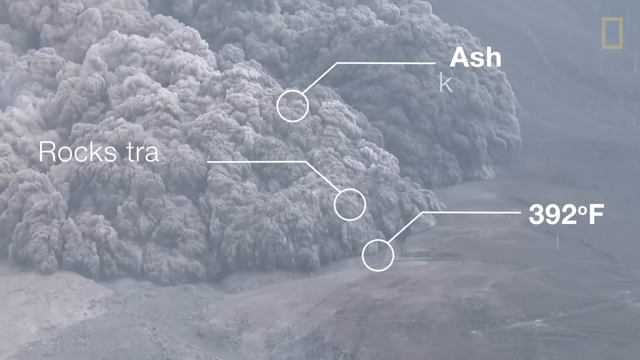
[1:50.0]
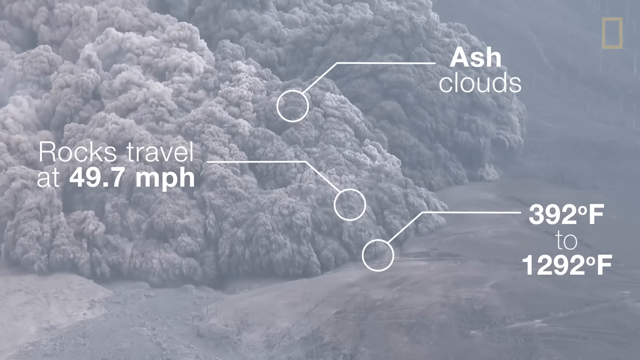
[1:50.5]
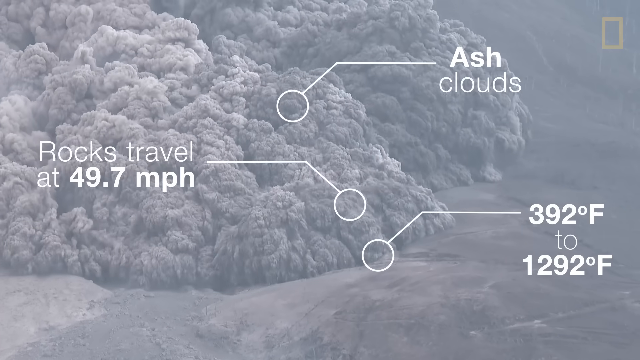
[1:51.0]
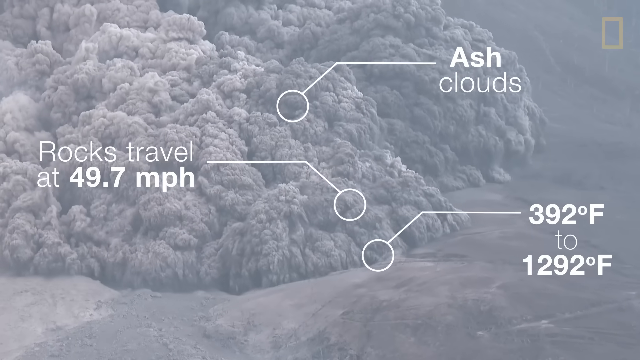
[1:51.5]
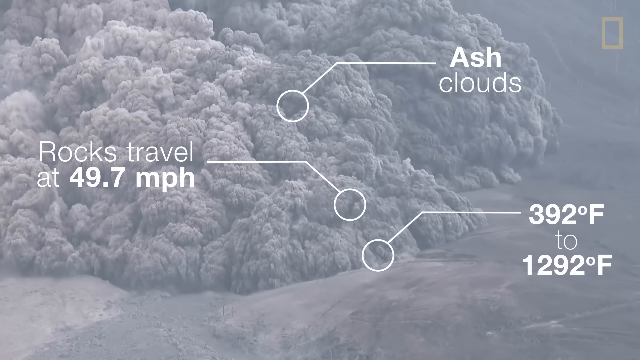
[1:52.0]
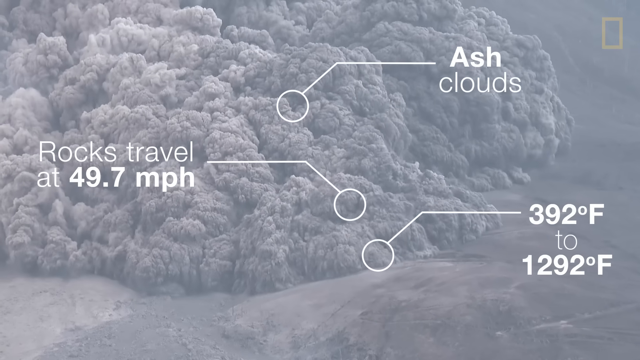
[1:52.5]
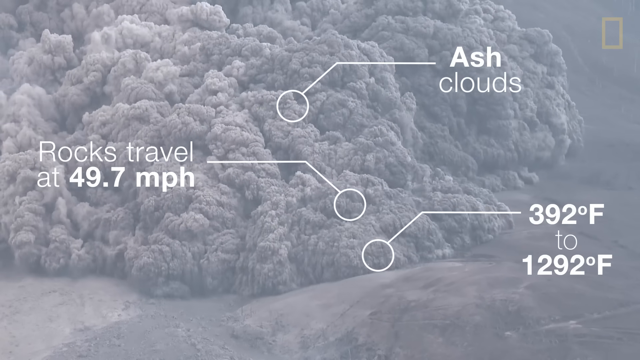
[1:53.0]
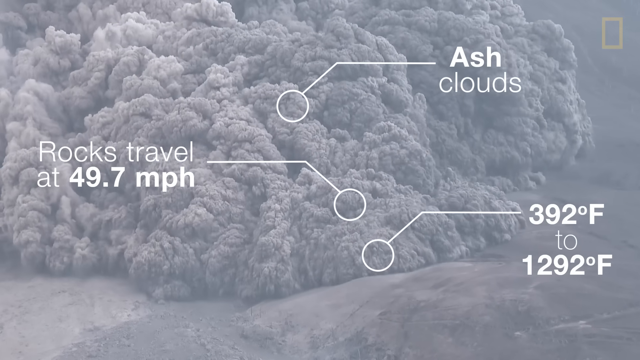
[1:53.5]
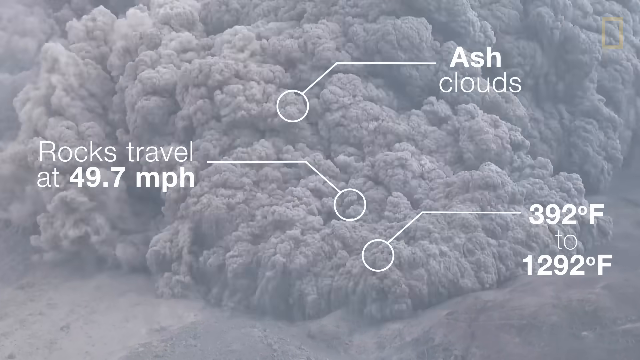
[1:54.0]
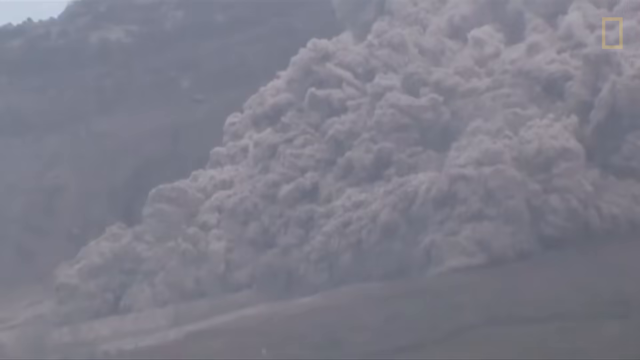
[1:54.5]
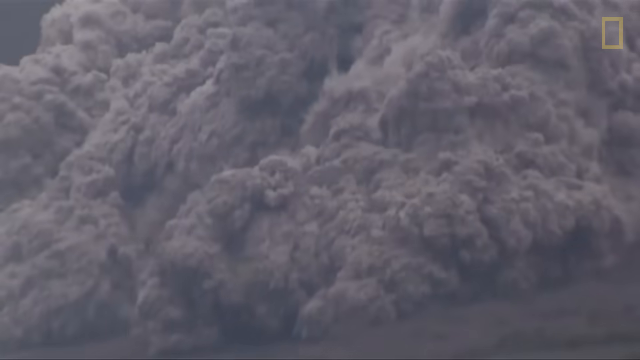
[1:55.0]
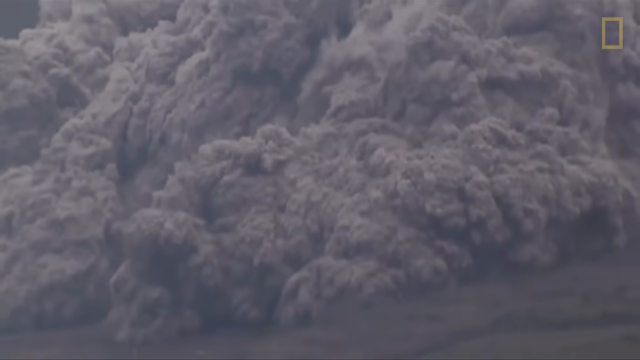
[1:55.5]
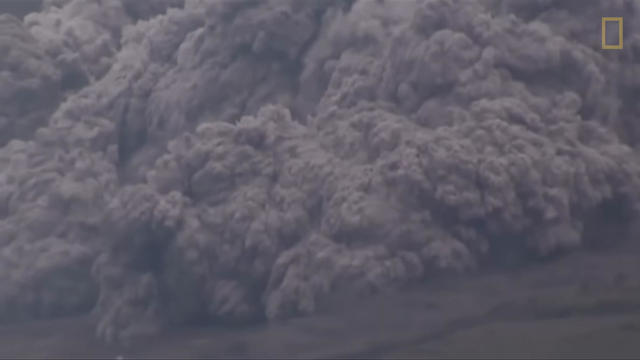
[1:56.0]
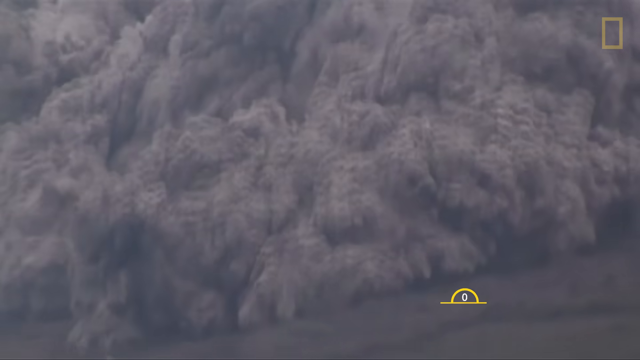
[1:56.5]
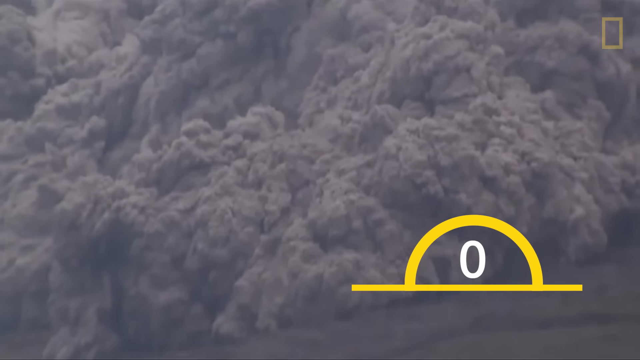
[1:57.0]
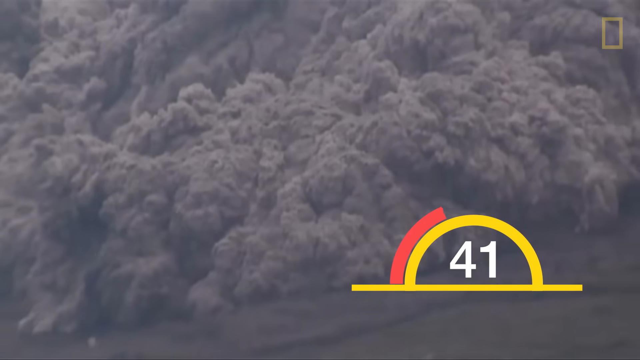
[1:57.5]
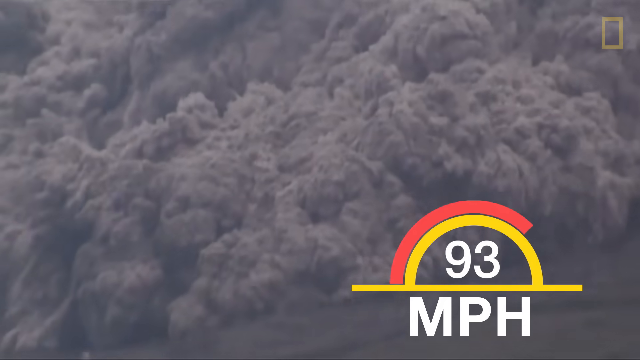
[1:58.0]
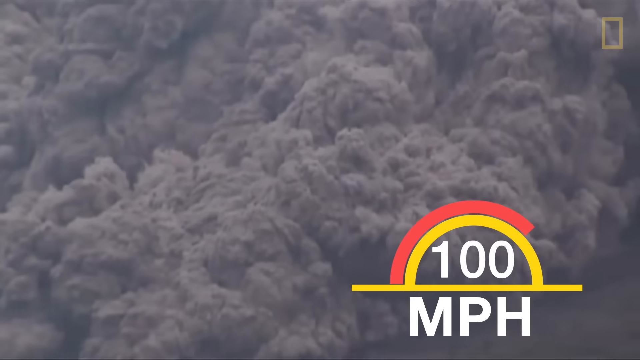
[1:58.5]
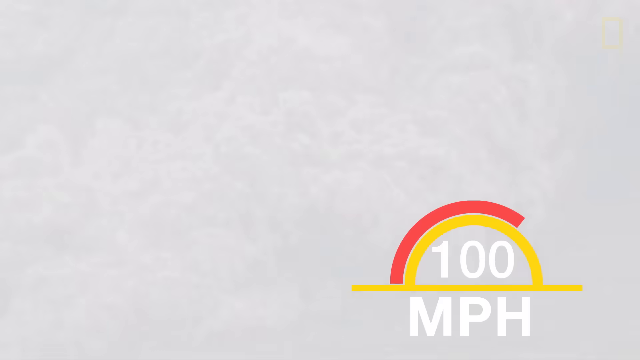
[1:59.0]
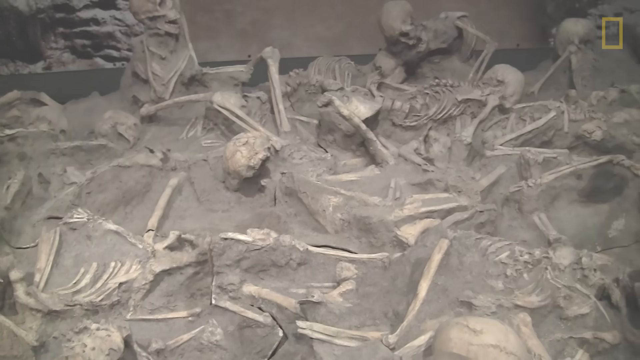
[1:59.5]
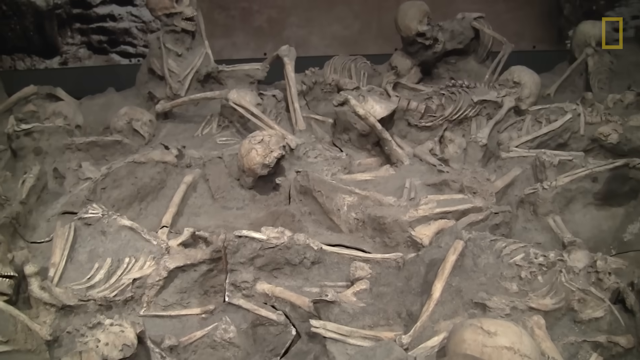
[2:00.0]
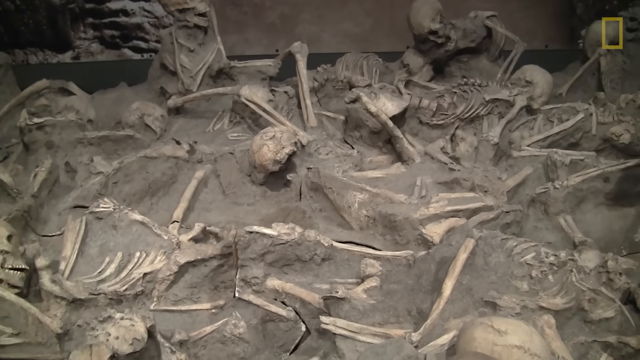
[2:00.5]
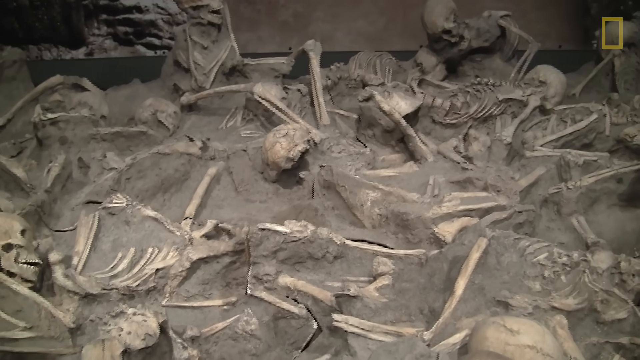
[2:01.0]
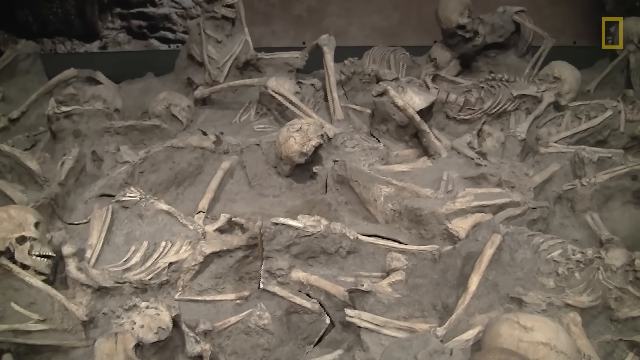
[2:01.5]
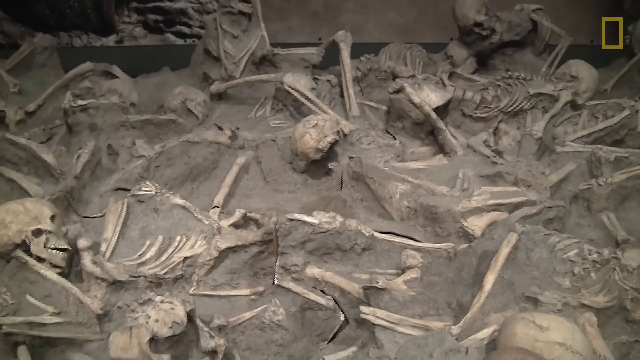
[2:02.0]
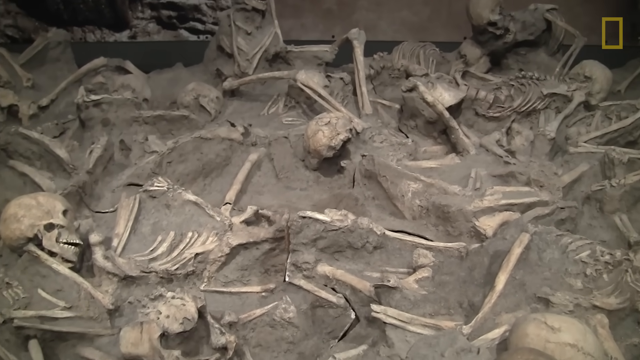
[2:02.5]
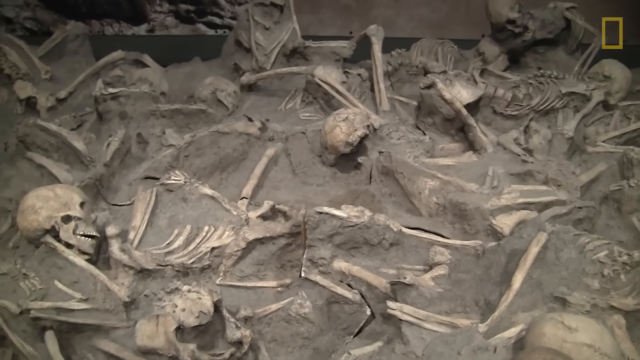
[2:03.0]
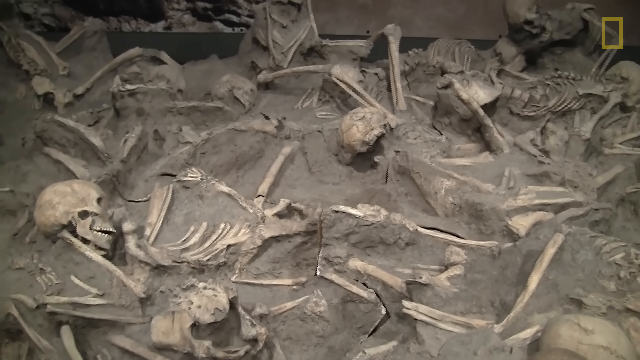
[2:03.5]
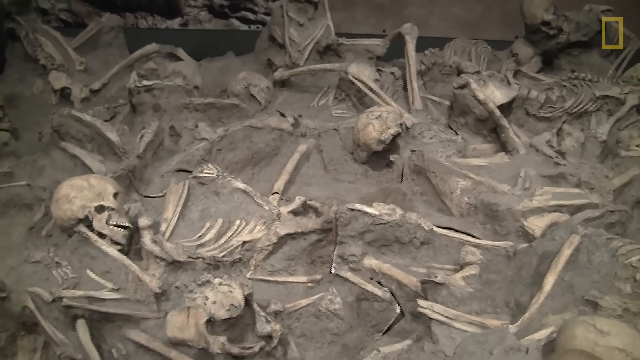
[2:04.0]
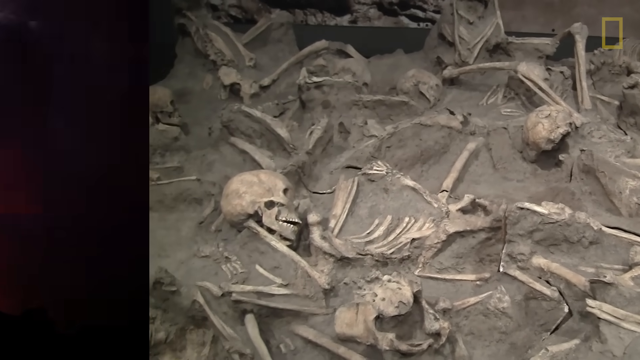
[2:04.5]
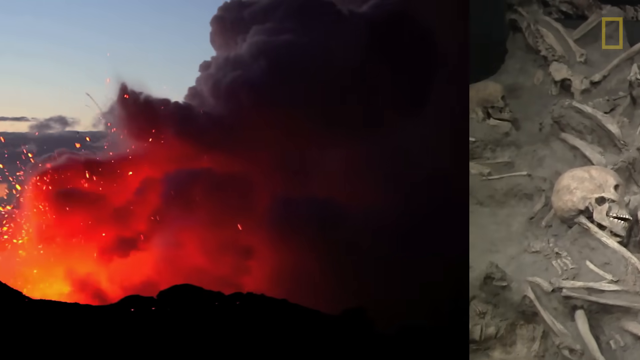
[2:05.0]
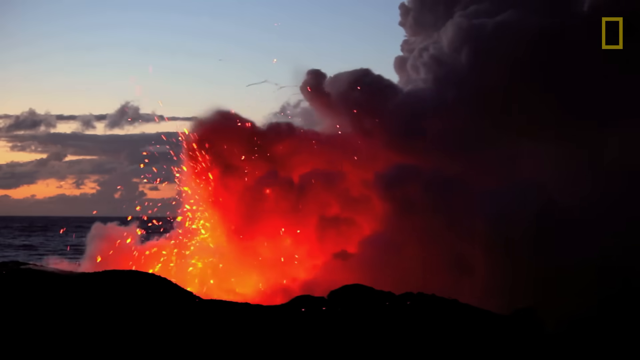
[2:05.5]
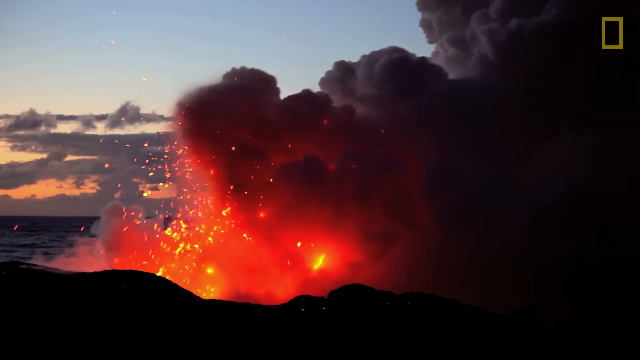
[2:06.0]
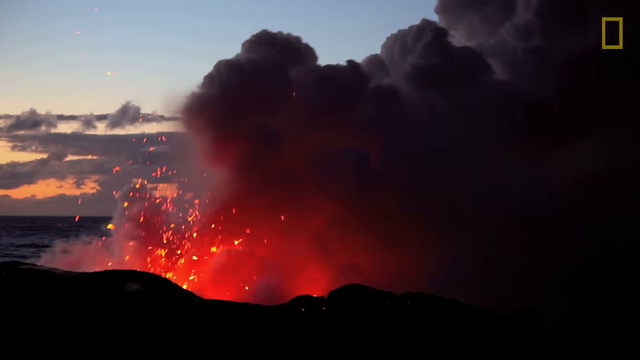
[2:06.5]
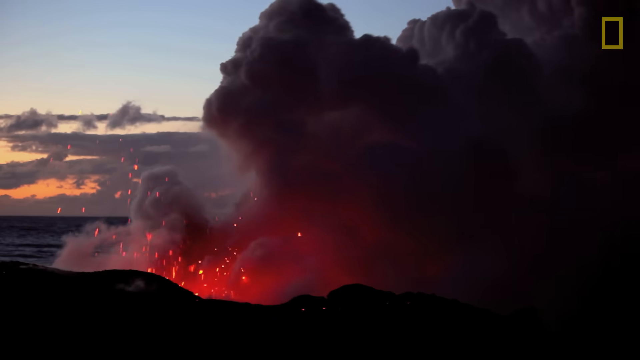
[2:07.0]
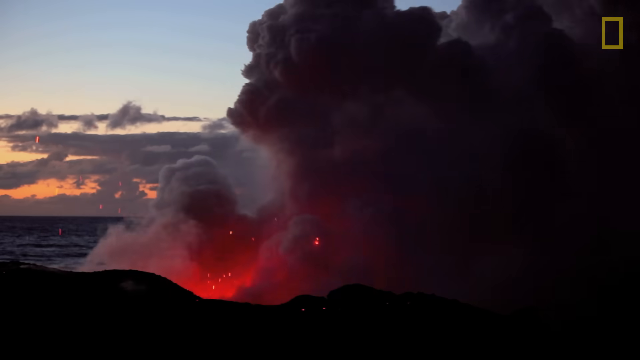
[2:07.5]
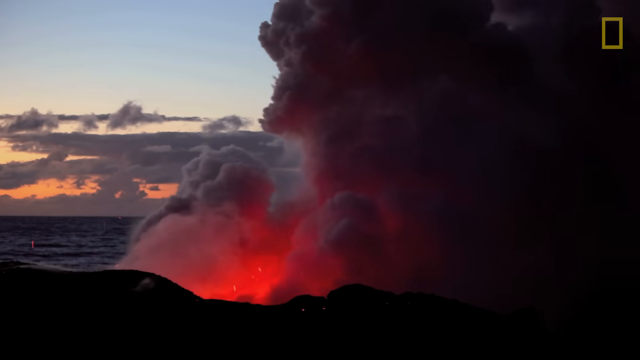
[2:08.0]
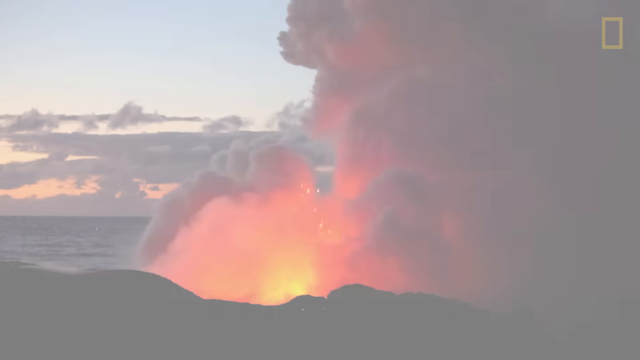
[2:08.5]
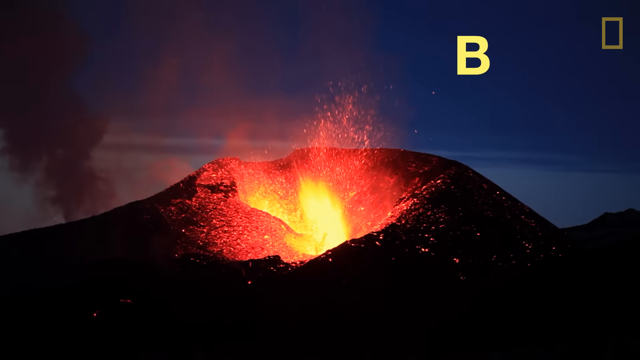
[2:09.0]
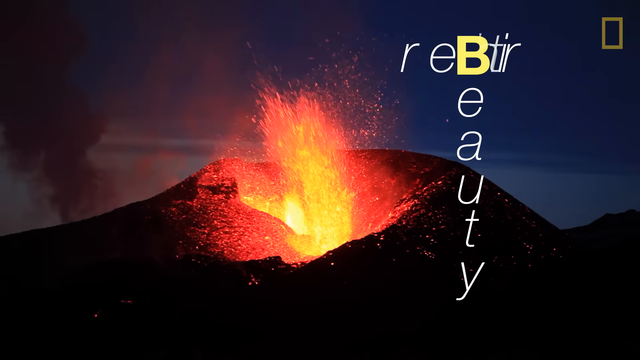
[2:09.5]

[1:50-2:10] Thick gray smoke fills the frame from the top to about two inches from the bottom, and from the left to about two inches from the right. Toward the top right, text reads "ash clouds", with a line going to the left and angling down-left to a circle. On the right side, text reads "rocks travel at 49.7 miles per hour", with a line going to the right, angling down, and ending in a circle. In the bottom right corner, text reads "392 degrees Fahrenheit to 1,292 degrees Fahrenheit", with a line going over to the left and then down-left to a circle. The smoke then rolls very fast over the right side. Another big, thick cloud of smoke spreads across the center, and in the bottom right is a little yellow line with a yellow arch over it, "100" under it, and "miles per hour" below that; a red arch comes over the top of it, going about three quarters of the way across. The video cuts to an area with a lot of dirt and solidified lava, with bones scattered across the whole screen: human remains including skulls, ribs, arms and legs. The camera pans a little to the left. Back outside, at what seems to be dusk, a huge lava explosion erupts in the center with black smoke rolling up the right side. Across to the right is a different image of a big lava explosion in the center, yellow at the core with red and orange above it; to the right it says "rebirth", and from the B down it says "beauty".